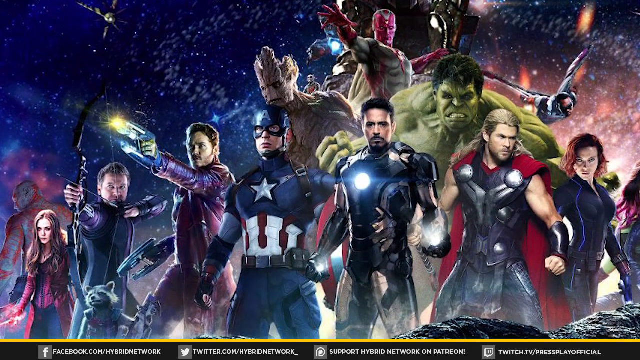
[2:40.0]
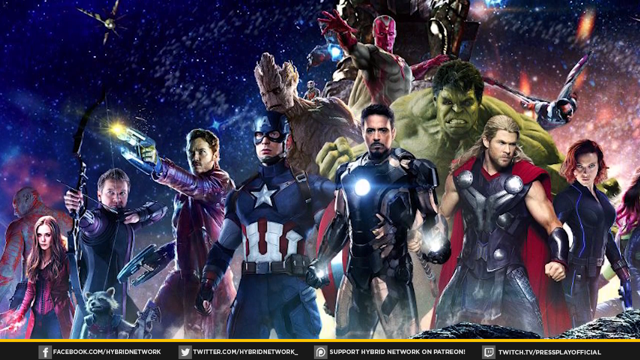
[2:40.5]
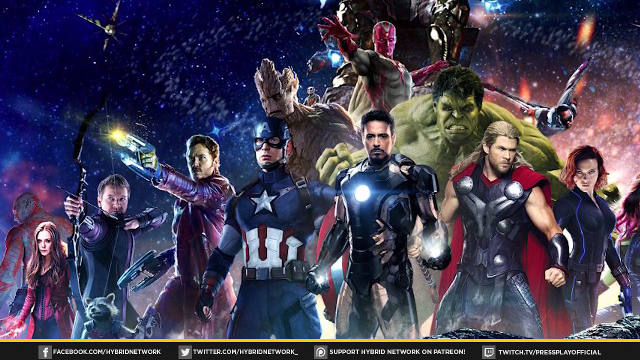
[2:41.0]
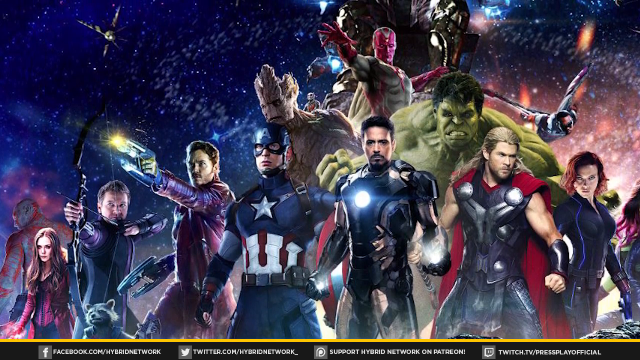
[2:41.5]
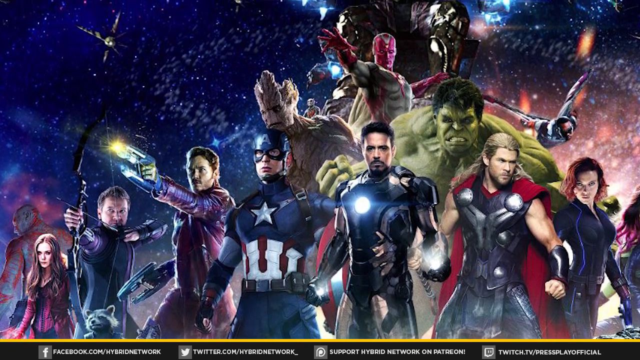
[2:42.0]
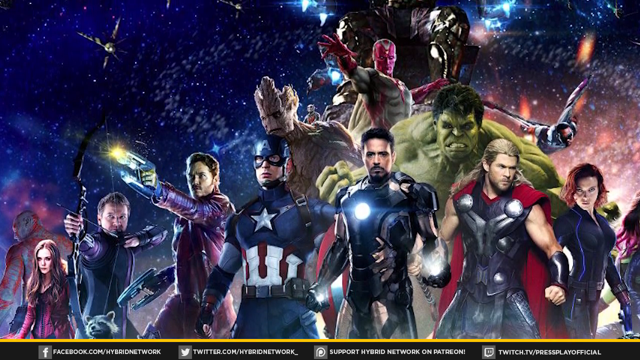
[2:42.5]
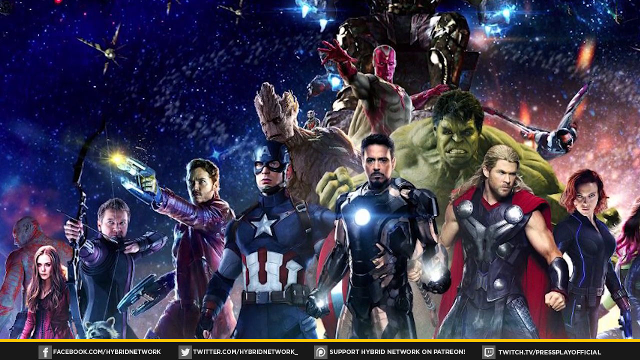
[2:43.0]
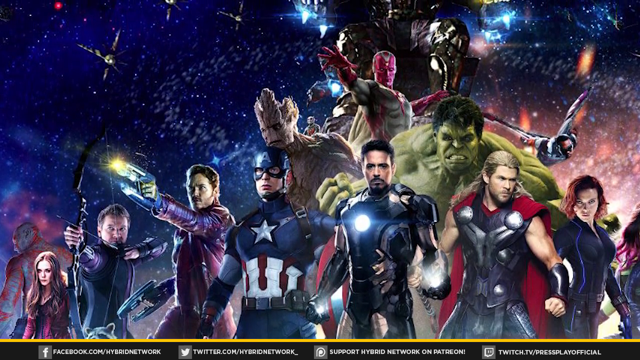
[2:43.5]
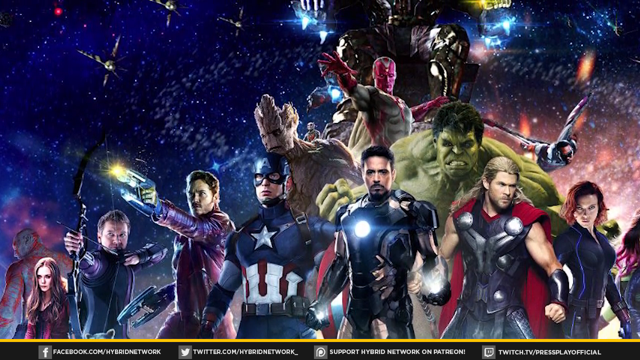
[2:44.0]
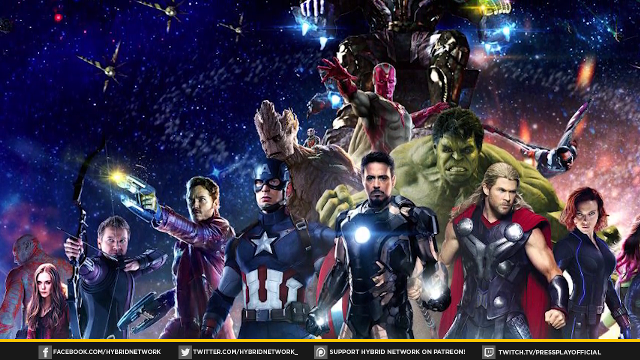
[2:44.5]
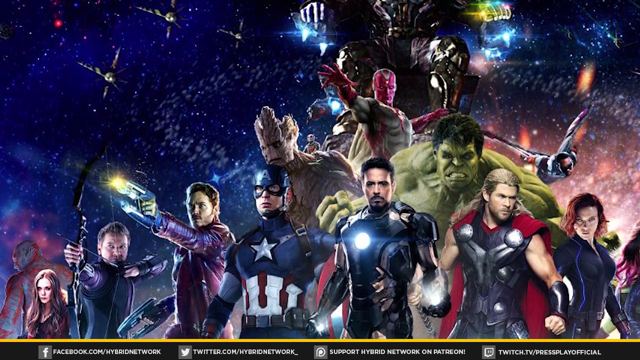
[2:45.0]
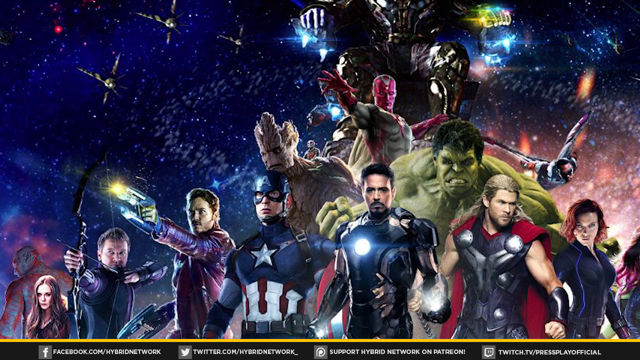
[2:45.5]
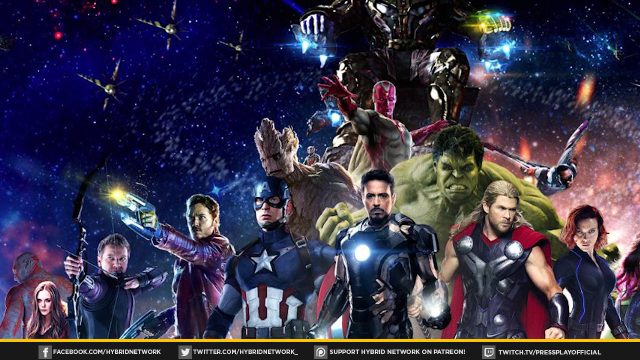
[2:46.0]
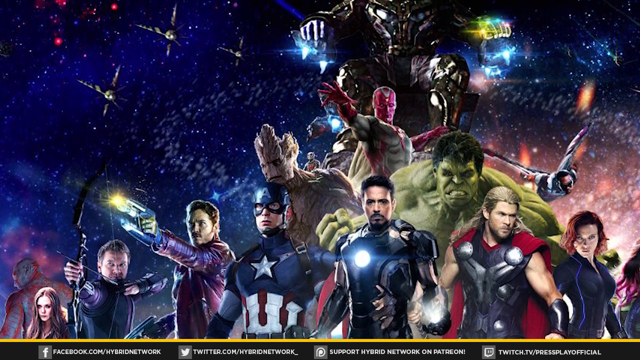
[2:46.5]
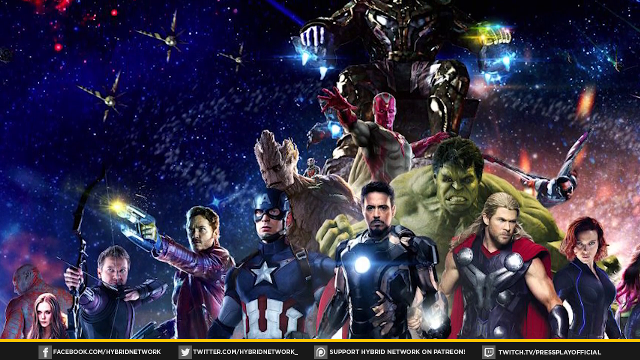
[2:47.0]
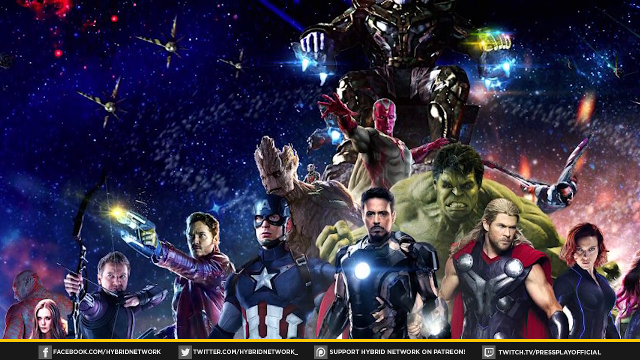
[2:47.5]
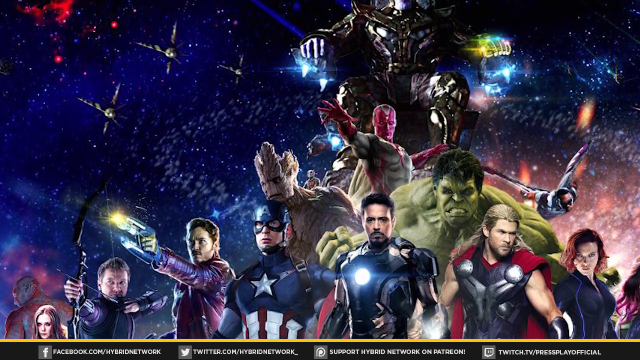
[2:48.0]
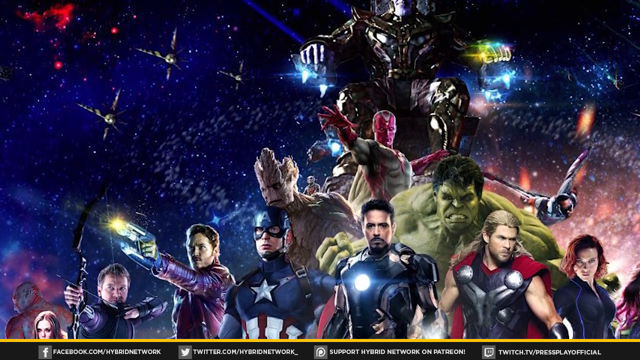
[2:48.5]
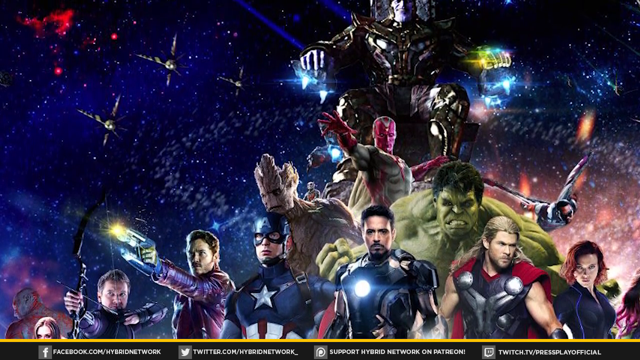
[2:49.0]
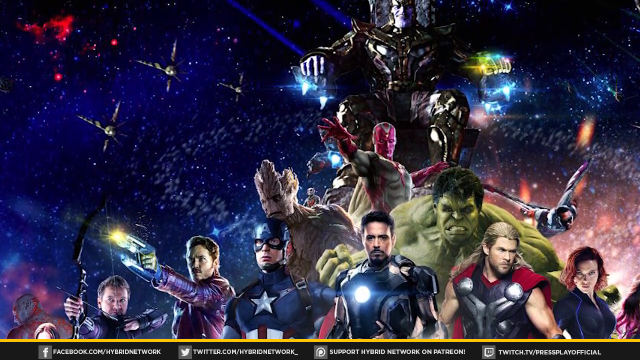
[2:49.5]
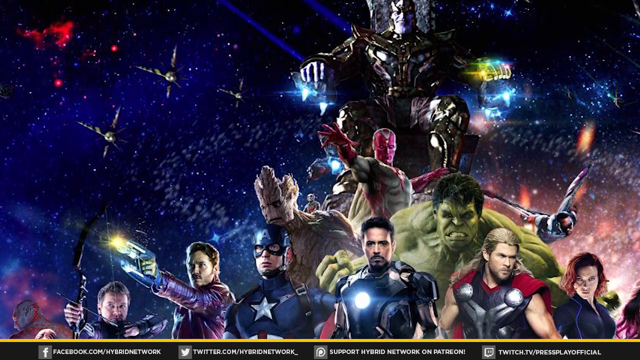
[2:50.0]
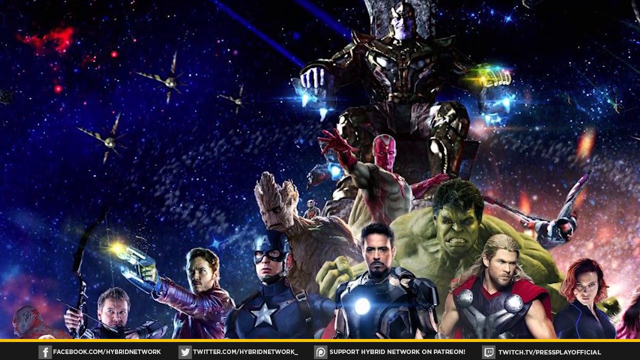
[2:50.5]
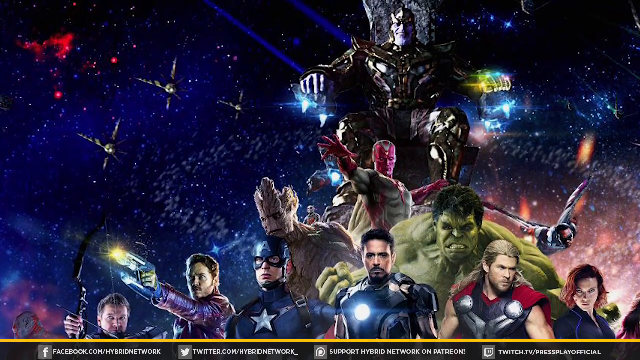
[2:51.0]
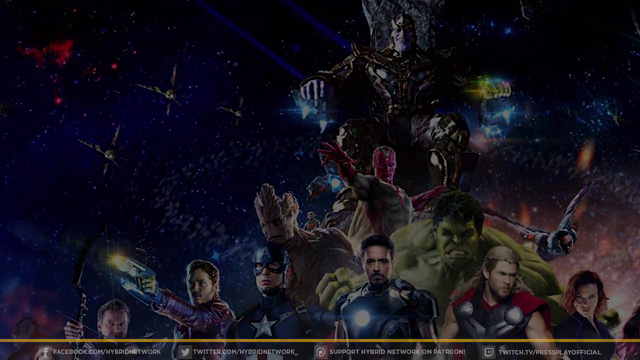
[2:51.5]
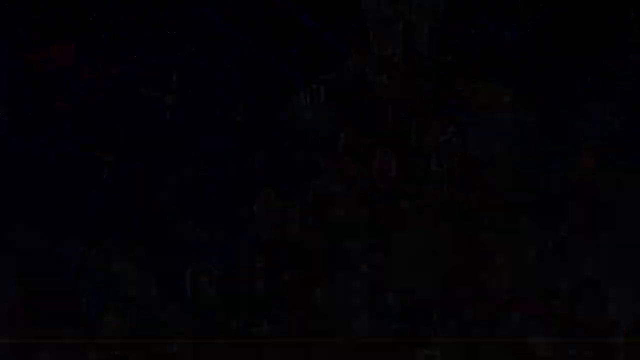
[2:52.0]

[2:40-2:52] The video appears to be about superhero movies, comic books or both. Toward the left of an image is a woman dressed in red with long flowing hair, with a muscled character behind her. There is a character with a crossbow, Rocket the Raccoon from Guardians of the Galaxy, and Chris Pratt's character from Guardians of the Galaxy holding two space weapons. More toward the right is Captain America, with what looks like Iron Man next to him, the Incredible Hulk in the background, and Groot behind Captain America. Further right is Thor, then what looks like Scarlett Johansson's character, and next to her another superhero with burgundy hair, only partially in view. Behind them is a kind of spacey sky in shades of red and blue with some stars and clouds. The camera pans upward over this group of characters gathered from different IP universes. As it moves up, what looks like a monster comes into frame, with space drones toward the right, green, blue and pink light, and some swirling cosmos in the background. The camera continues panning up to what looks like an evil character dressed all in silver sitting in a throne, kind of above the other characters, and below that a figure that looks dressed in red with arms outstretched. The camera keeps panning upward.